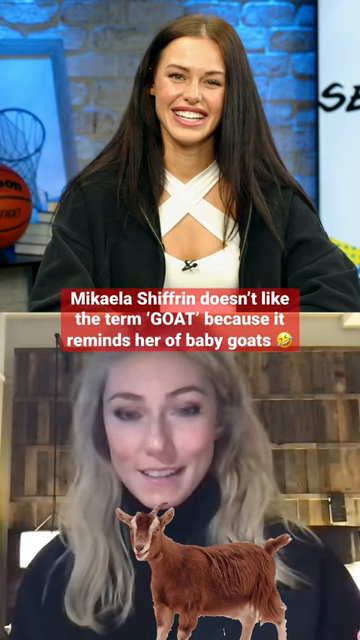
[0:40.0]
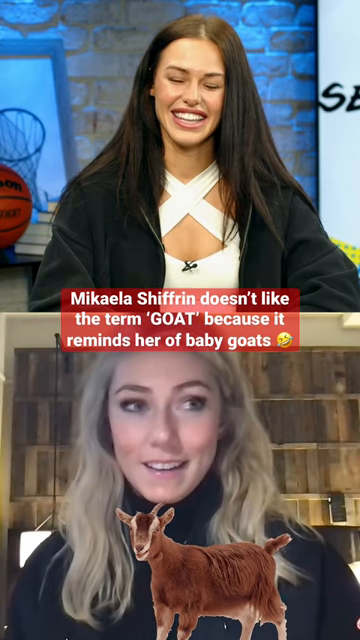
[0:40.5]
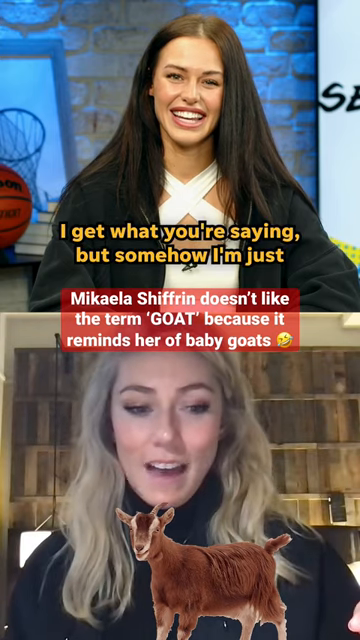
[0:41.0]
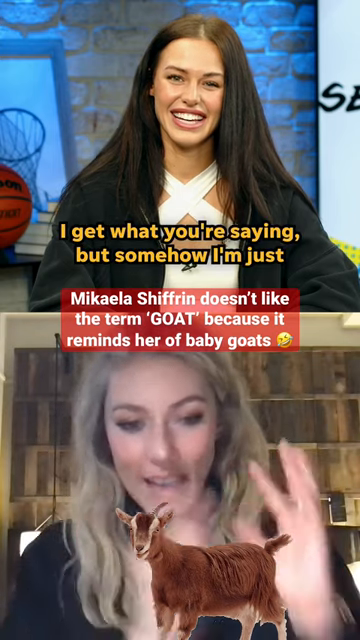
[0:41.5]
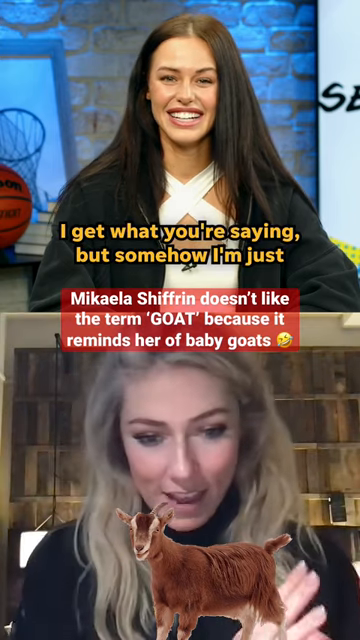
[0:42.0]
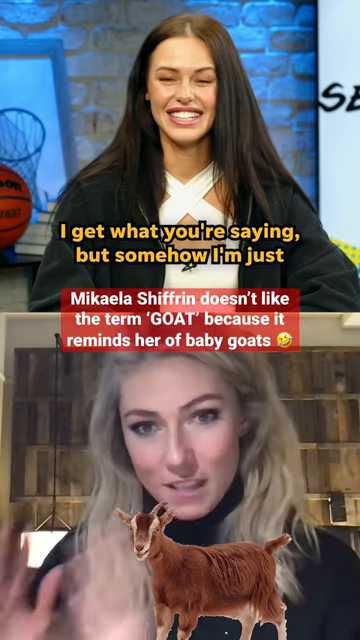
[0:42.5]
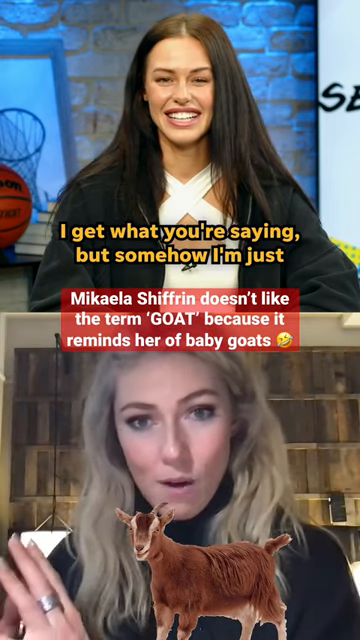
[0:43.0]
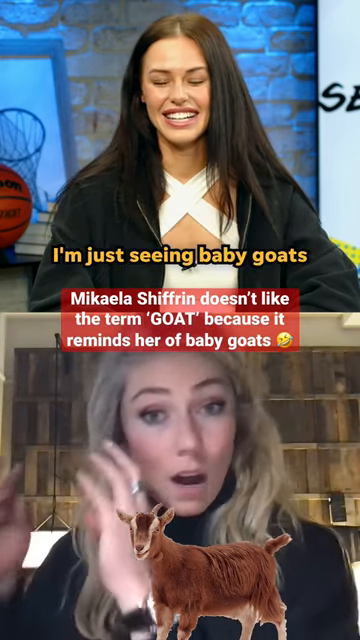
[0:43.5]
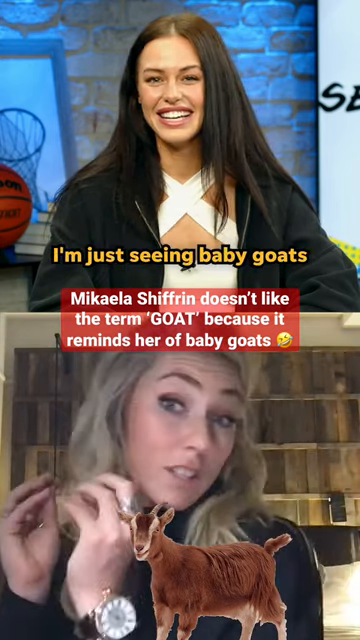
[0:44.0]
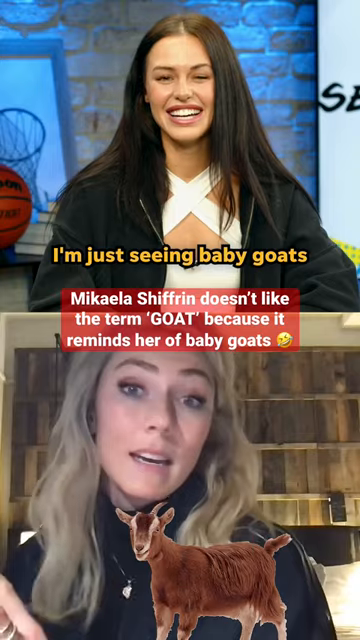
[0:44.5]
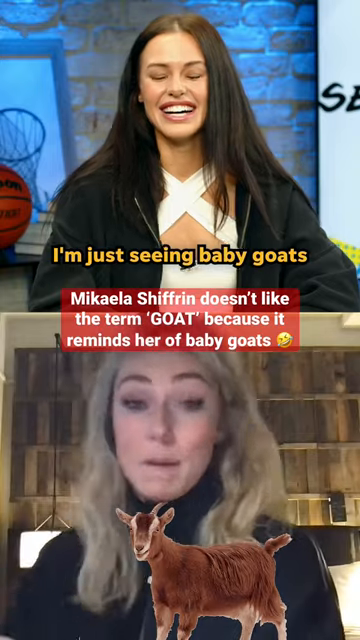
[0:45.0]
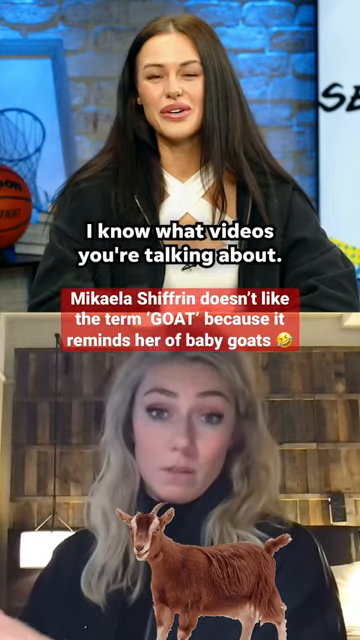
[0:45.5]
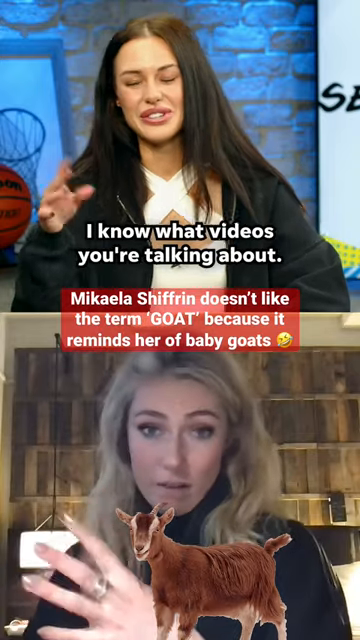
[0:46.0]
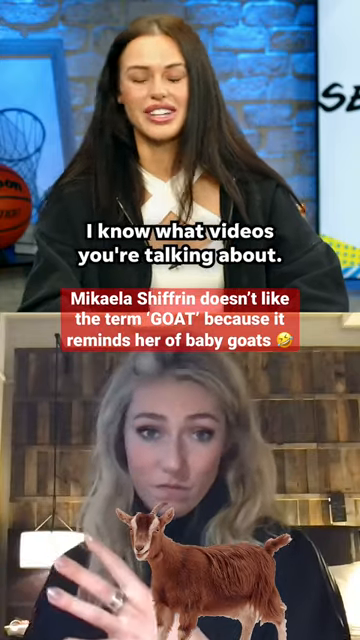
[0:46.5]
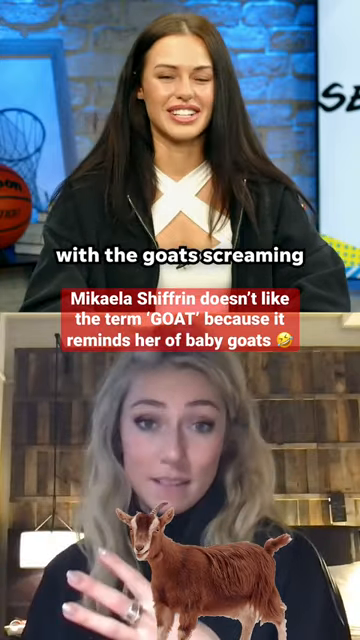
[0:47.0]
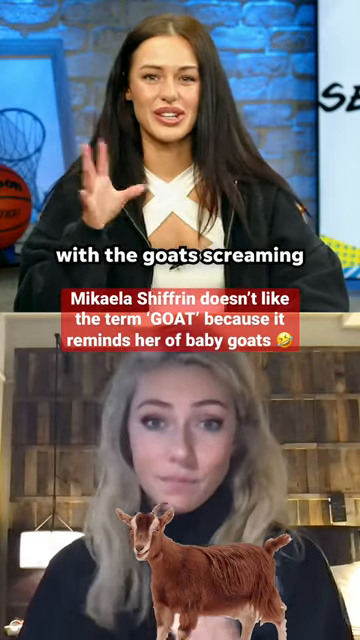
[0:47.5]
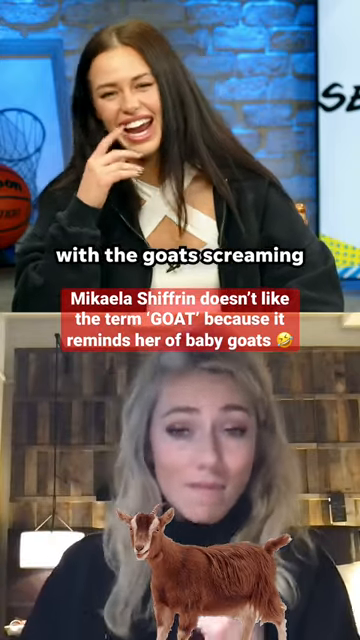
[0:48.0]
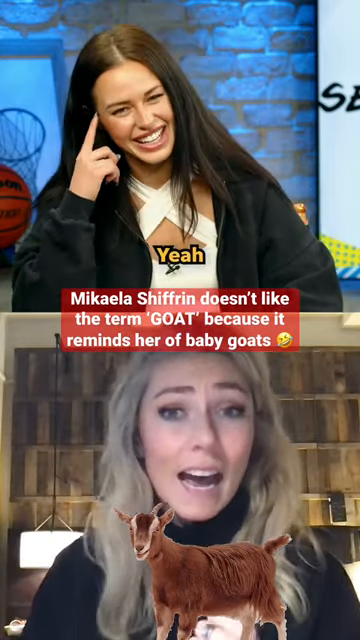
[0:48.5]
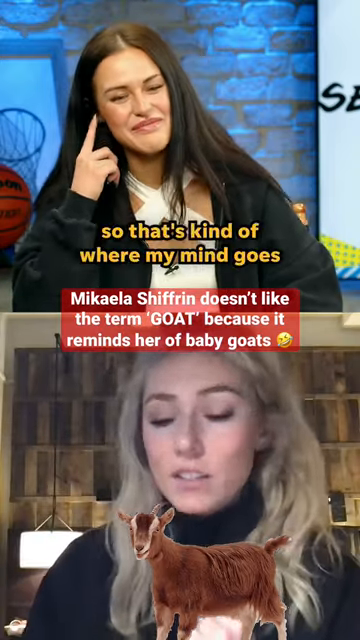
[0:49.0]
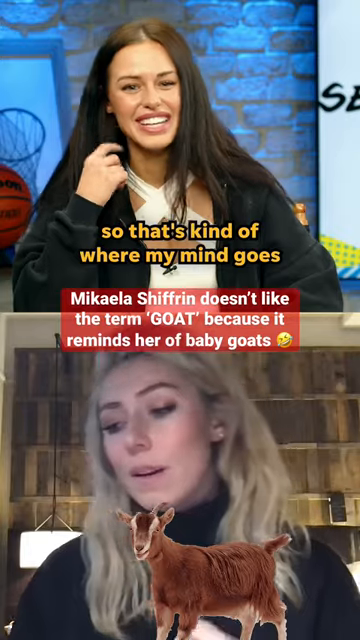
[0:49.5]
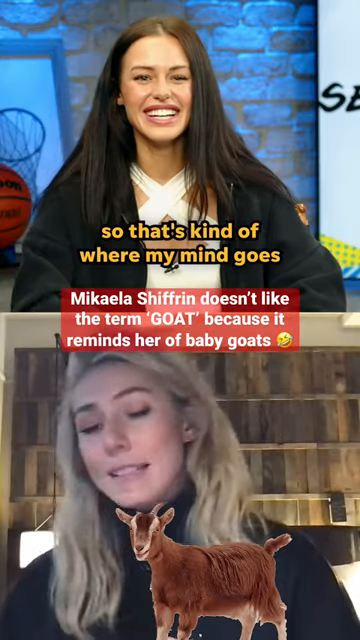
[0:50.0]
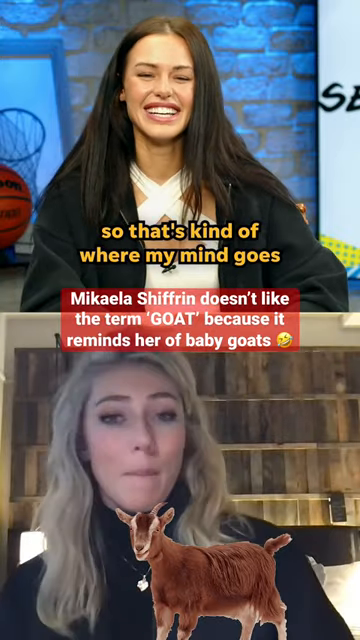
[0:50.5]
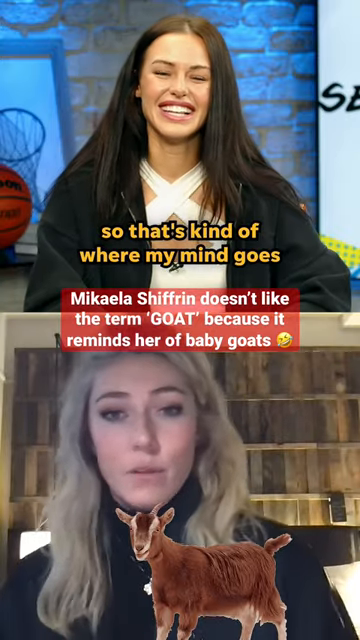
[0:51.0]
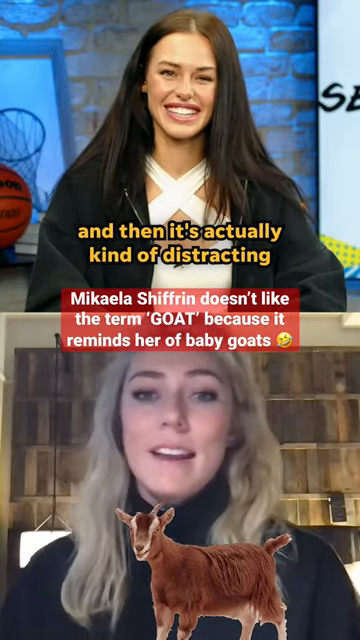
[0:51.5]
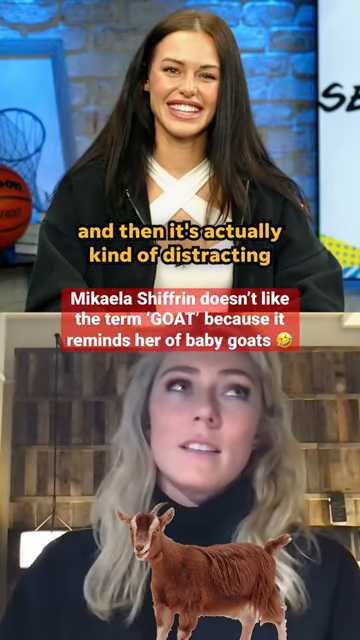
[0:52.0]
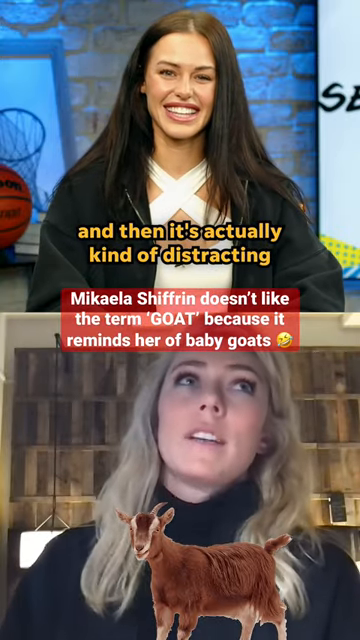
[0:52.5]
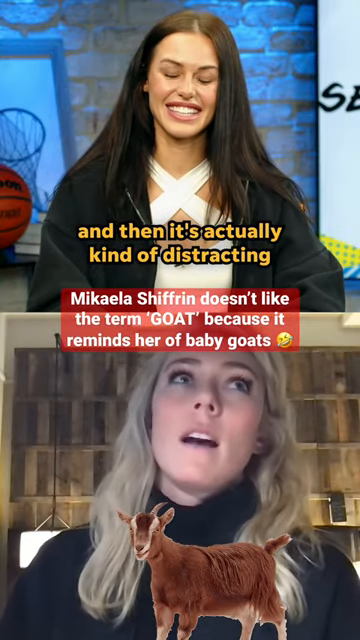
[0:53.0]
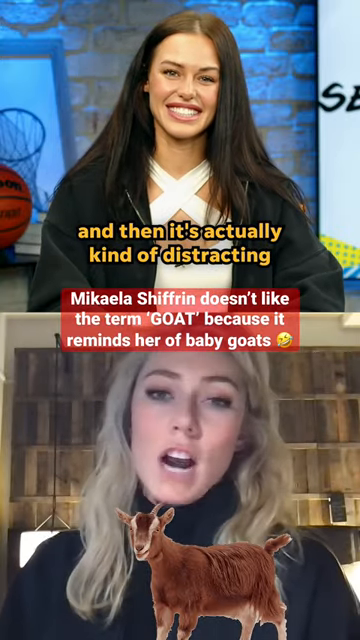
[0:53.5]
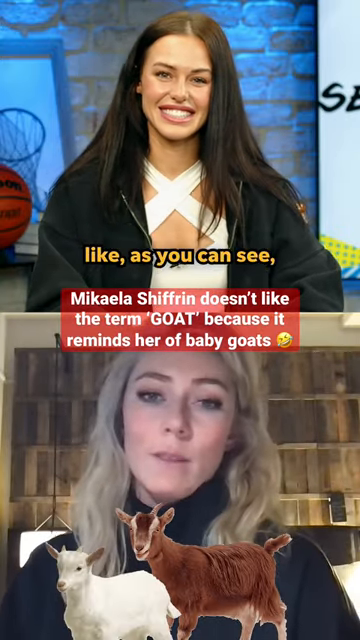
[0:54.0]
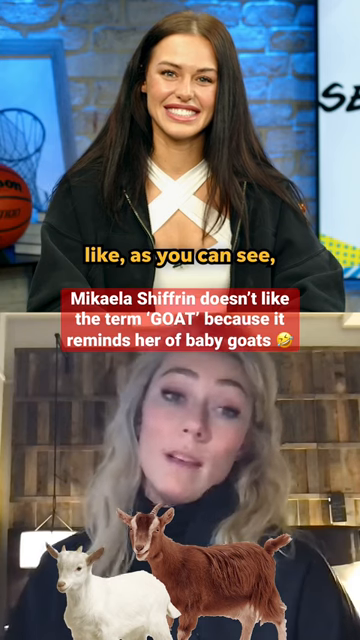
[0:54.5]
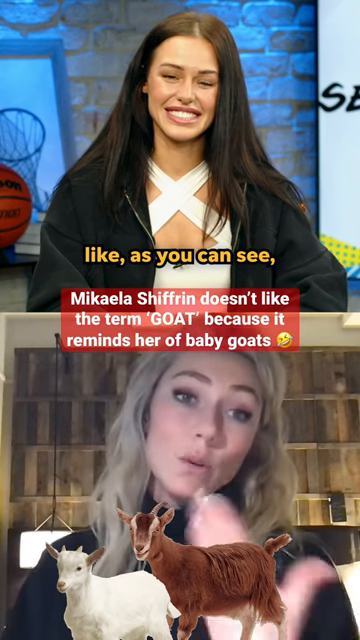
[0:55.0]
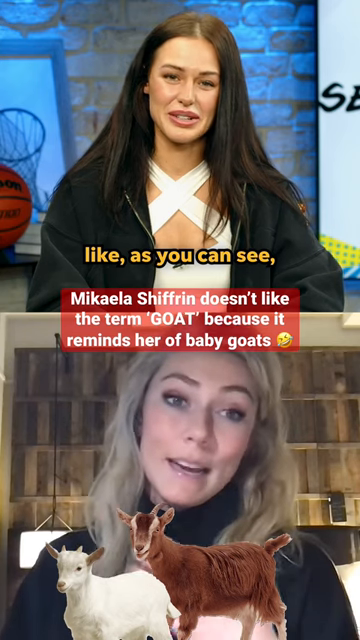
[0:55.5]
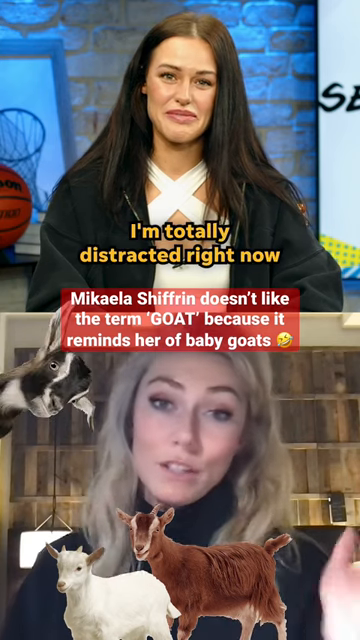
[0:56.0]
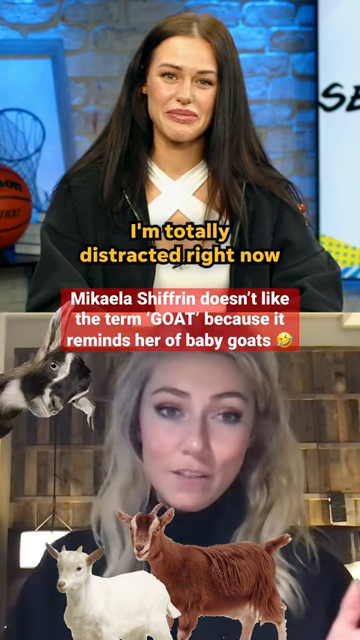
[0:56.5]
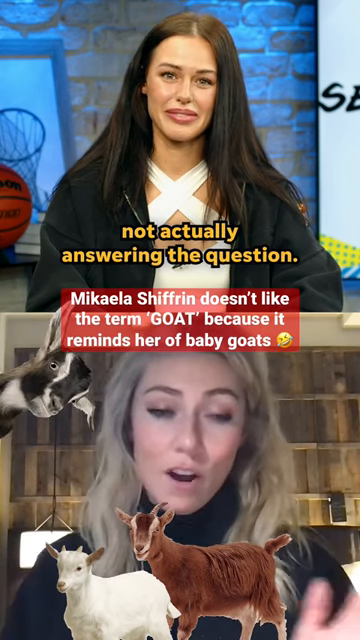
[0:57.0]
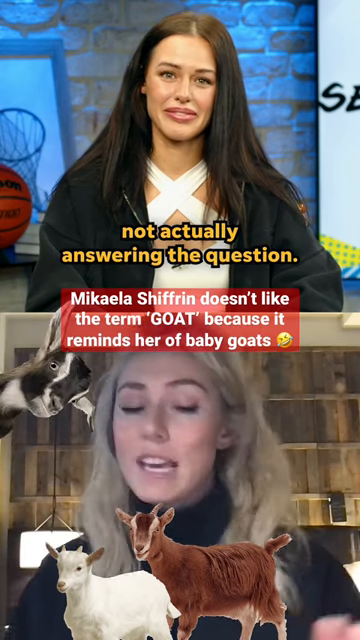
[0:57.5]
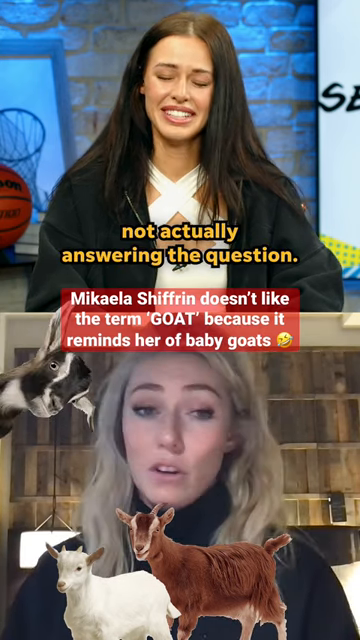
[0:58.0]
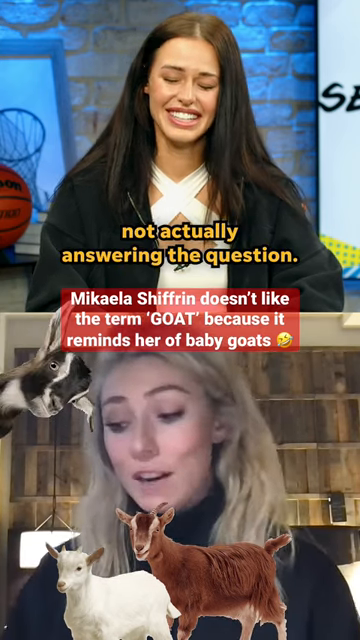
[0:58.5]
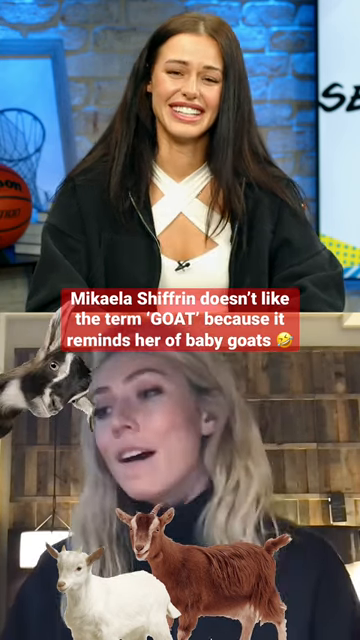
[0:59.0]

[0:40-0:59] Two girls are talking, one brunette and one blonde. Text on screen begins "I know what videos" and also reads "Mikayla Schiffen doesn't like the term goat because it reminds her of baby goats." A photo of goats appears, with three goats: one black and white, one brown, and one white, including a baby goat and a big goat. There is a blue background with a basketball and a hoop. One girl is smiling and looks happy; she wears a black jacket and a silver heart necklace. Both girls smile and seem to just be talking to each other. One girl has extremely straight hair, black nails and a more tan skin tone, while the other has blonde, wavy hair and fair skin. They might be basketball players.